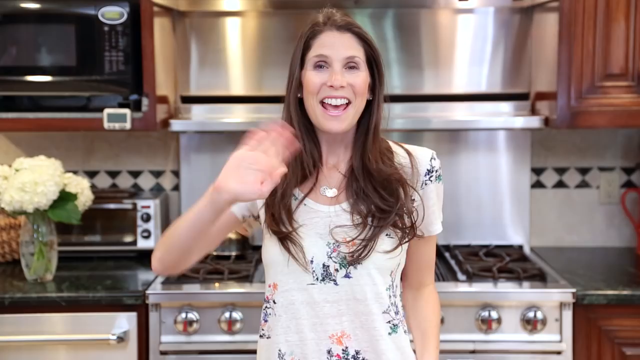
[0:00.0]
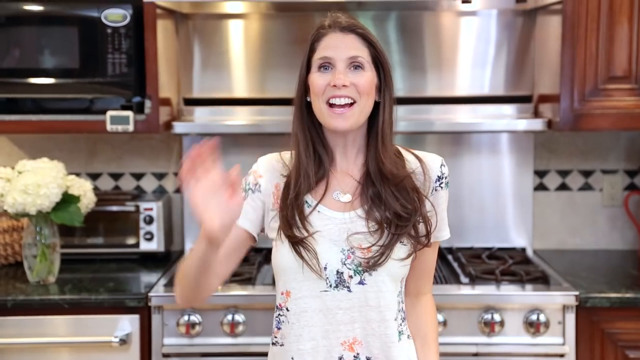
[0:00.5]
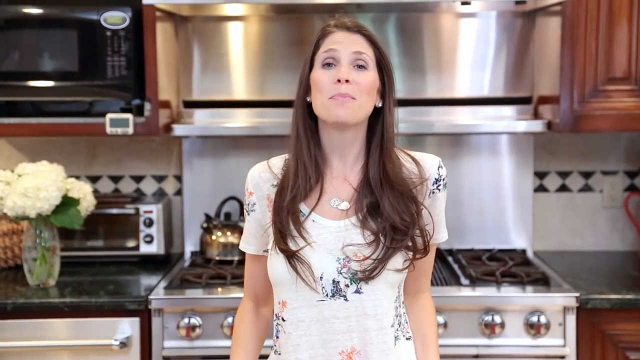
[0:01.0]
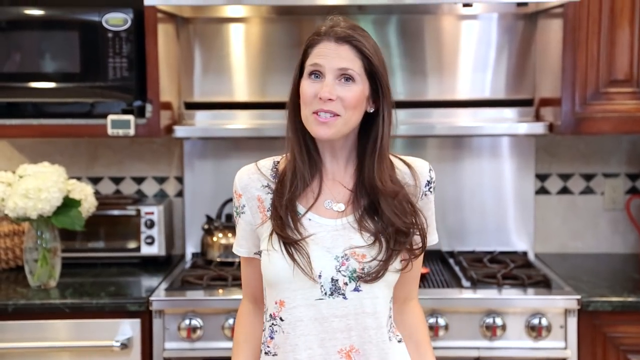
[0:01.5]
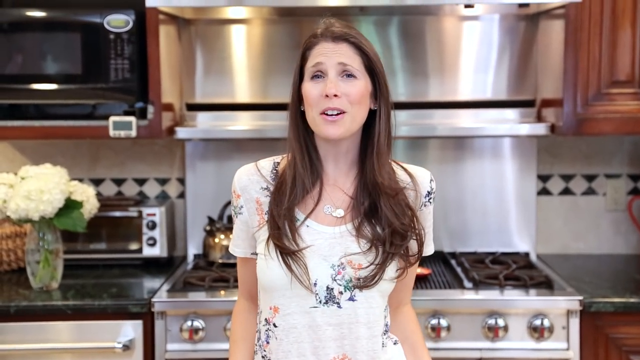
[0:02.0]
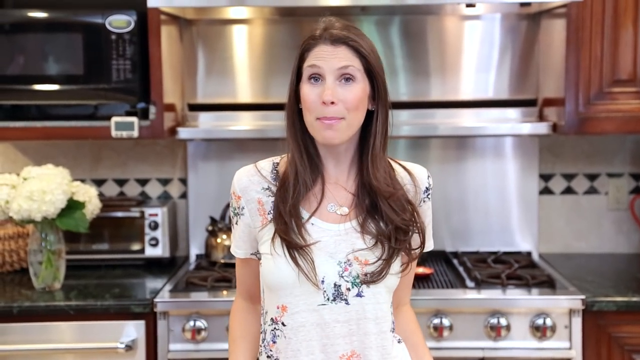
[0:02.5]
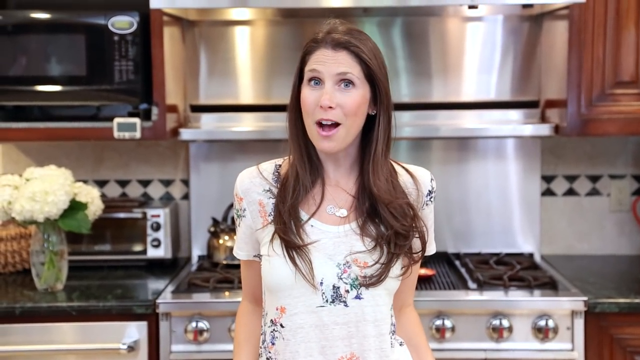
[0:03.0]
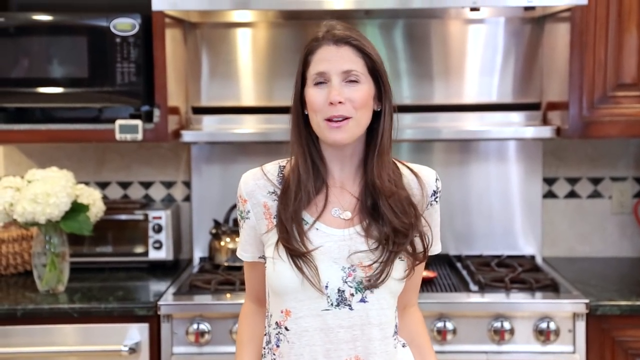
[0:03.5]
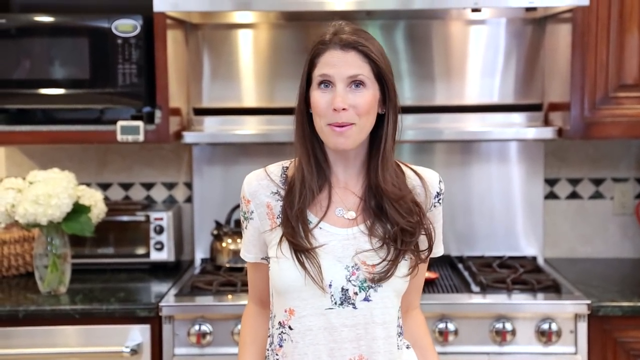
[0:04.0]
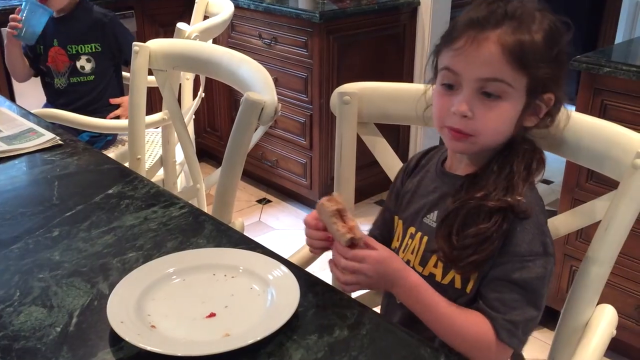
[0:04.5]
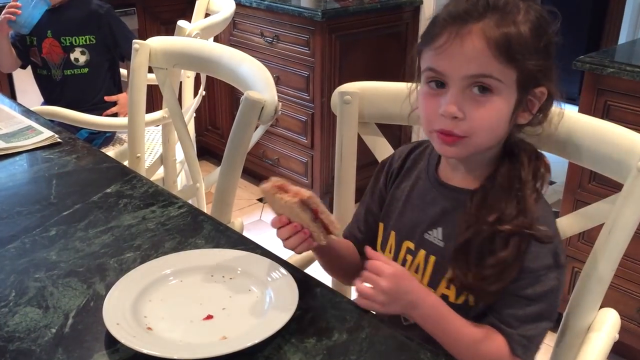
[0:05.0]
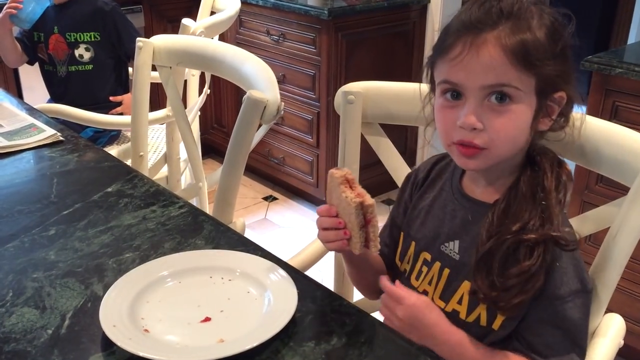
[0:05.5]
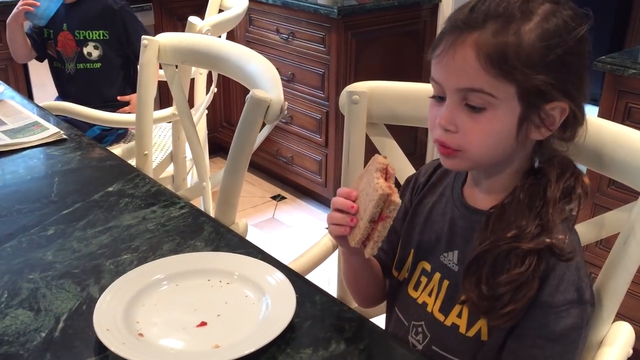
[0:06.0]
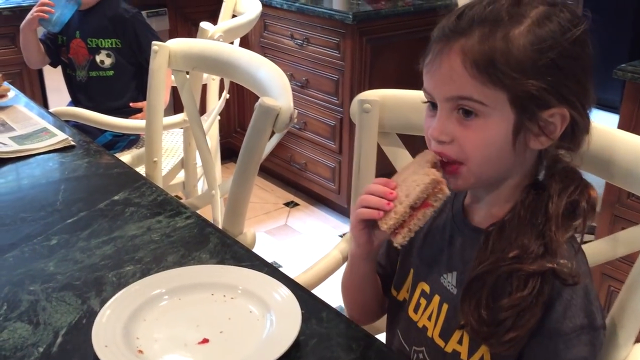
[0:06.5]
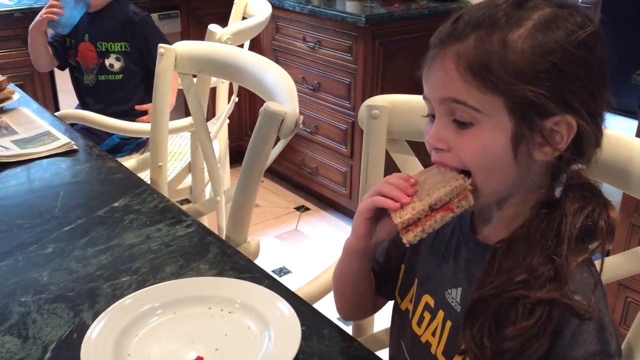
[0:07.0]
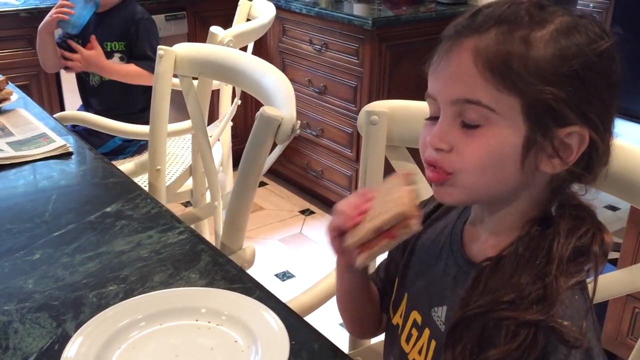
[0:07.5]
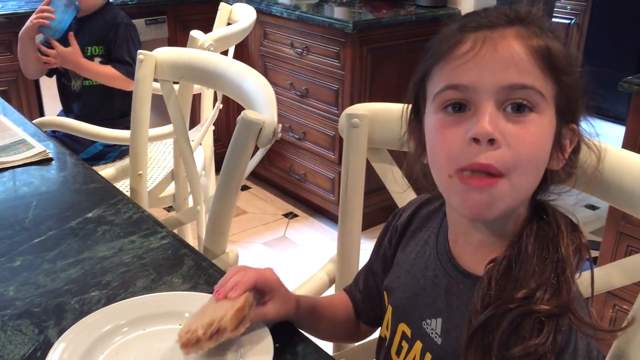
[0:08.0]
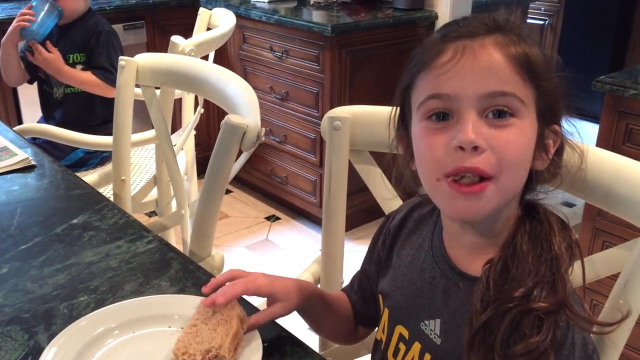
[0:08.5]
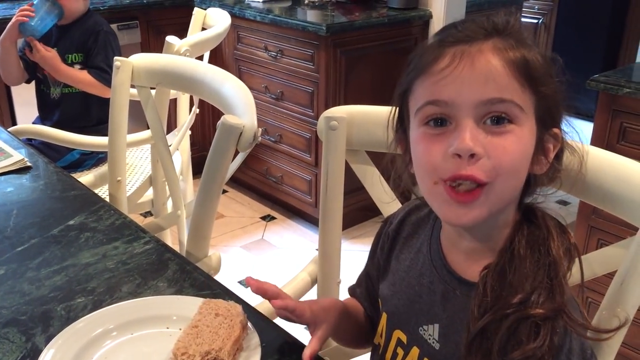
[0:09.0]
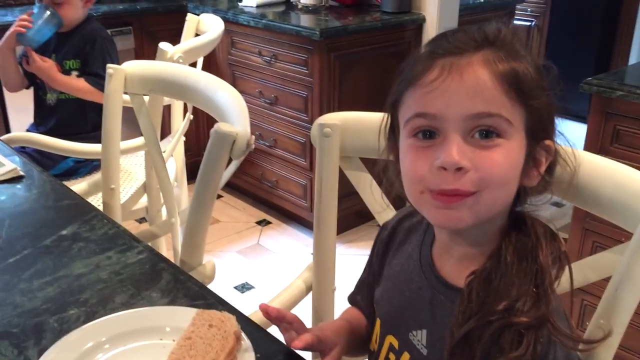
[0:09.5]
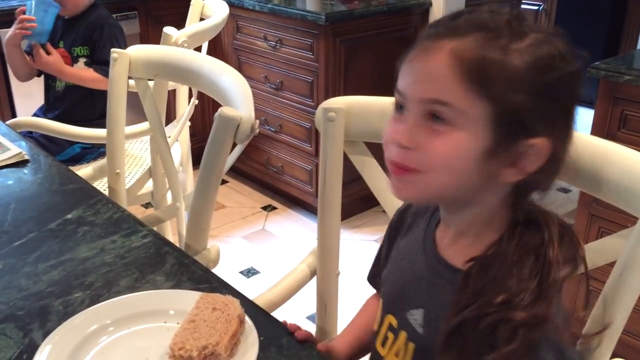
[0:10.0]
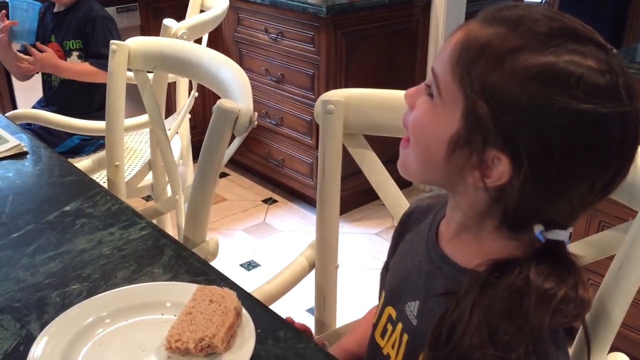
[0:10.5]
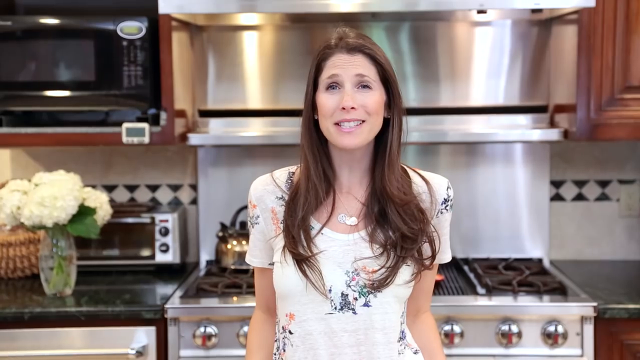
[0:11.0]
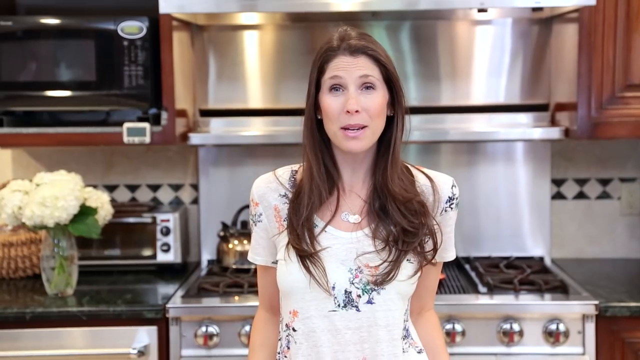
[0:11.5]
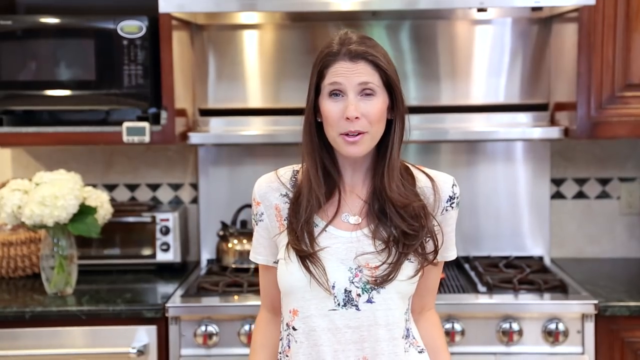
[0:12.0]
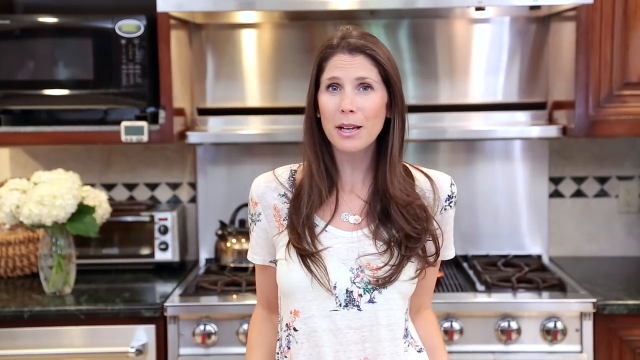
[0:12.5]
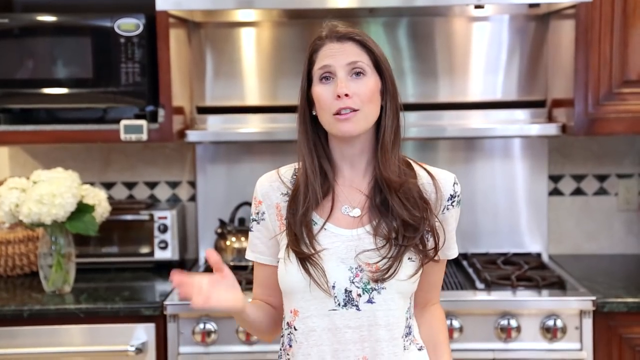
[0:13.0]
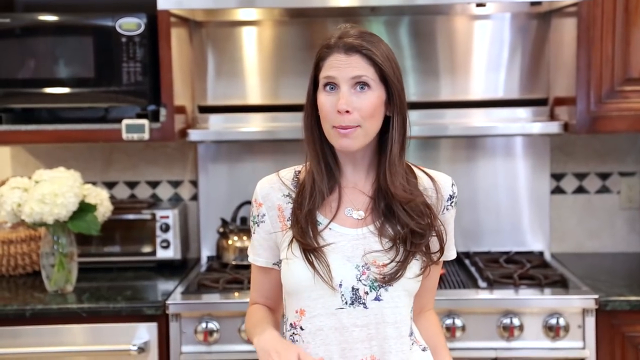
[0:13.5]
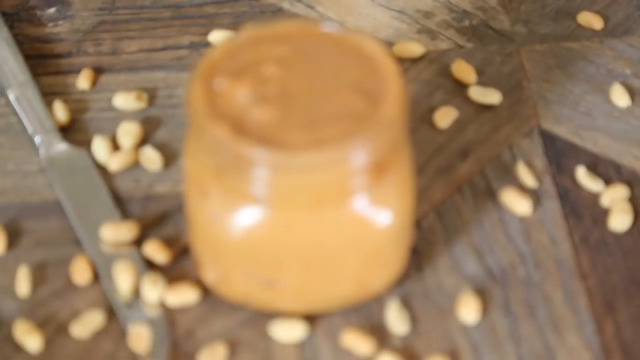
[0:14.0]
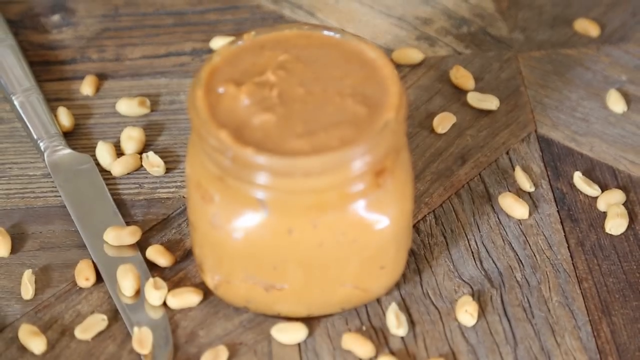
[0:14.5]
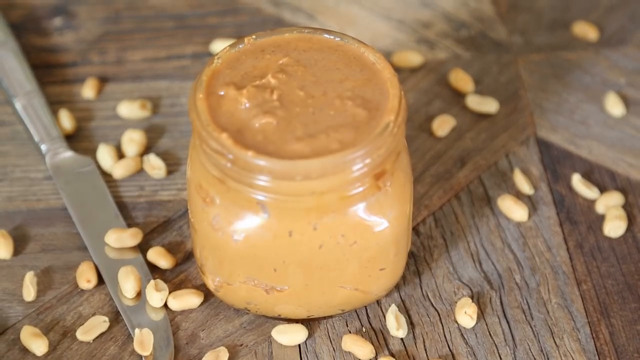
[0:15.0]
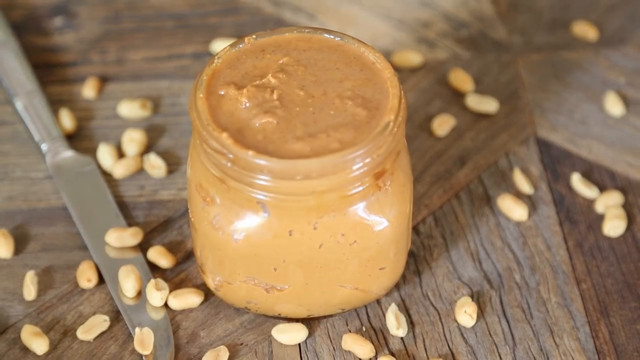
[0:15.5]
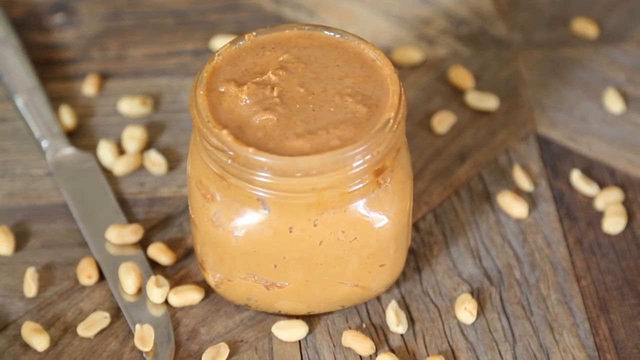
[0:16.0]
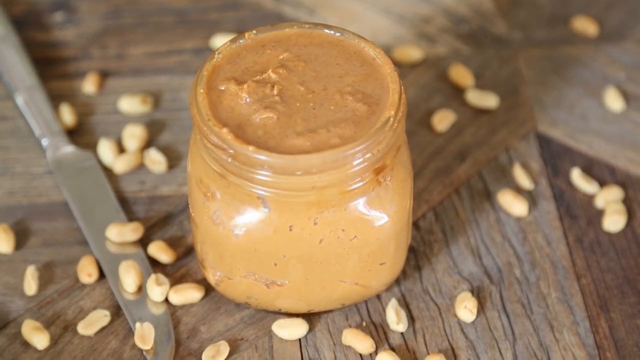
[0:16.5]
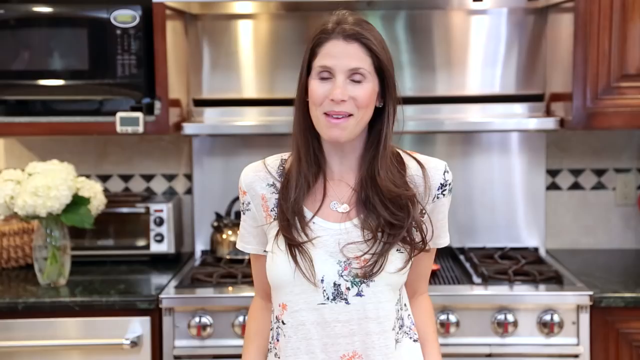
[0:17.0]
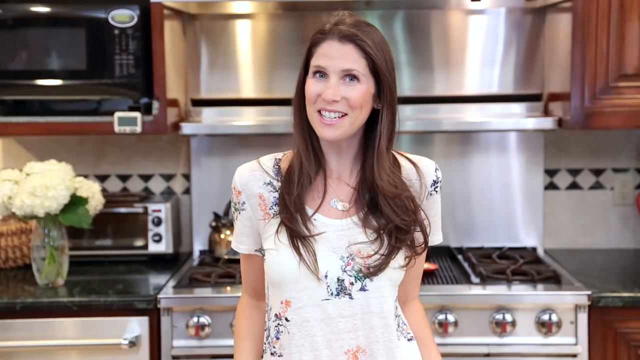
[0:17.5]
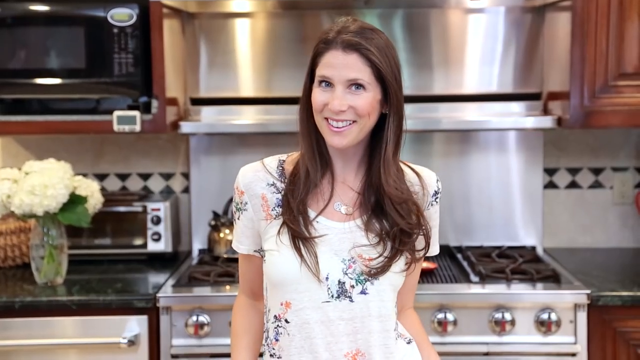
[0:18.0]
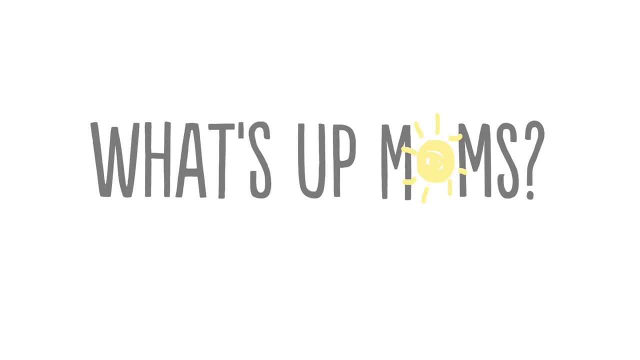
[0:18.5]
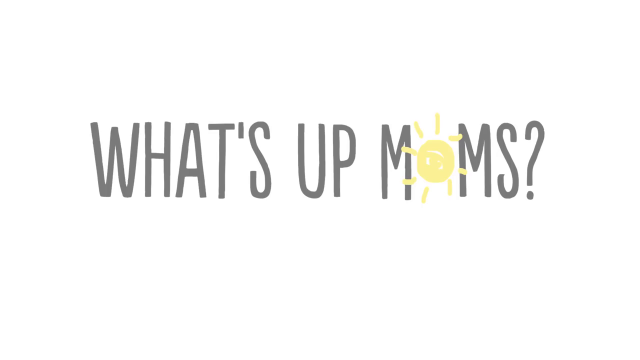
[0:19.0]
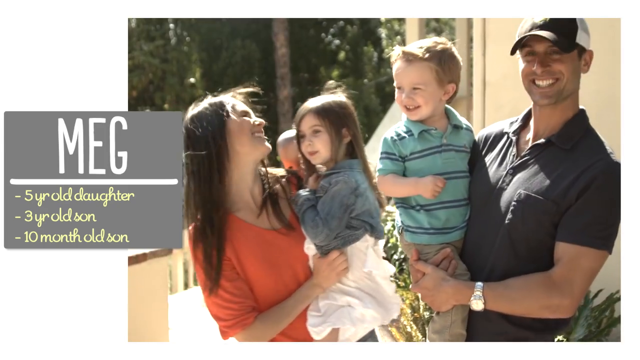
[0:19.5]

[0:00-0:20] A woman greets the viewer at the start of the video. She wears a white t-shirt with blue floral designs on it, waves her left hand, and has dark brown, shoulder-length hair. Her kitchen is visible behind her, along with white flowers. She seems to be speaking enthusiastically to the camera. The shot then switches to a child seated on a white chair with a table in front of her, possibly a dinner table. On the left-hand side she holds a piece of bread, which she seems to be eating. She wears an Adidas t-shirt. She looks straight at the camera and speaks. The video then returns to the woman, who is standing in front of her kitchen.